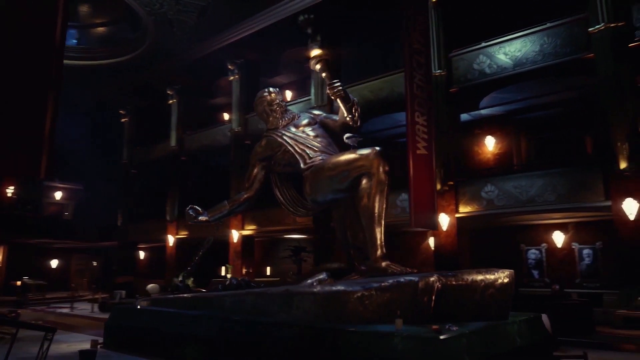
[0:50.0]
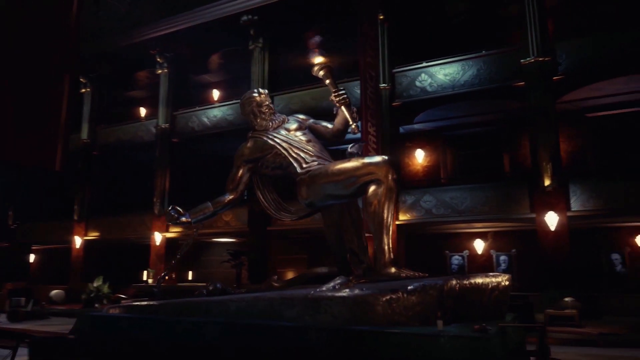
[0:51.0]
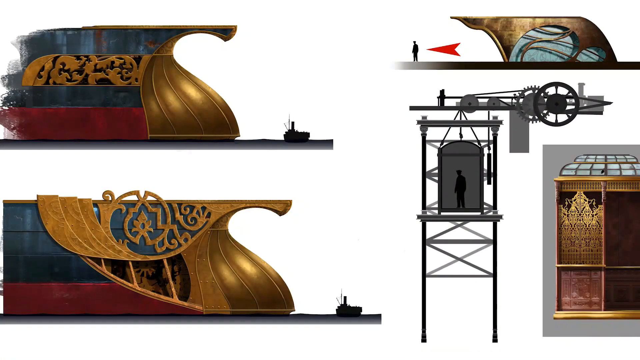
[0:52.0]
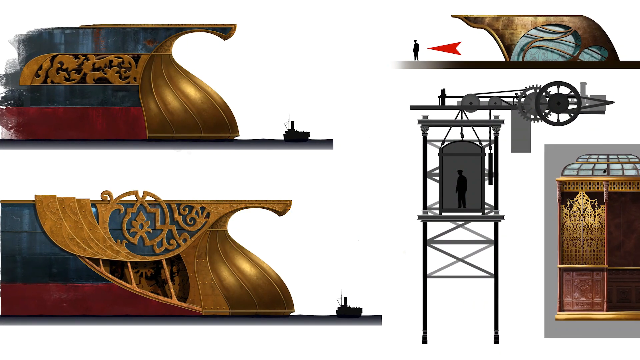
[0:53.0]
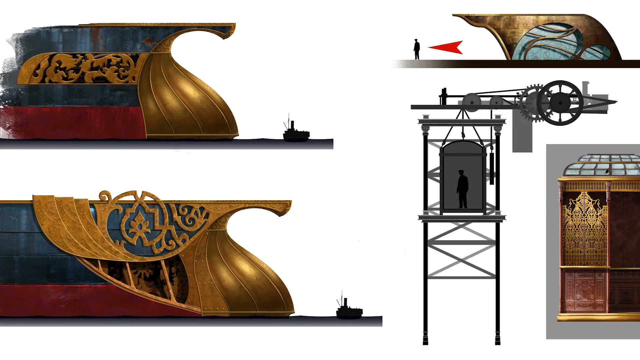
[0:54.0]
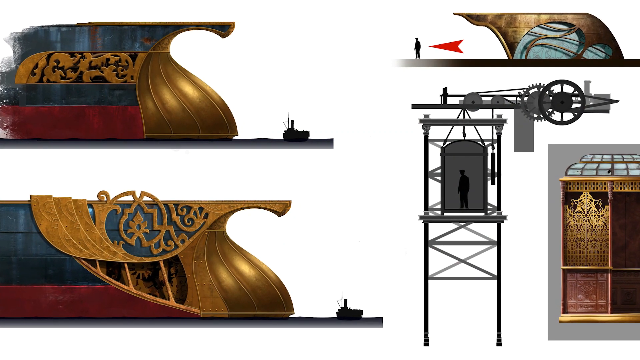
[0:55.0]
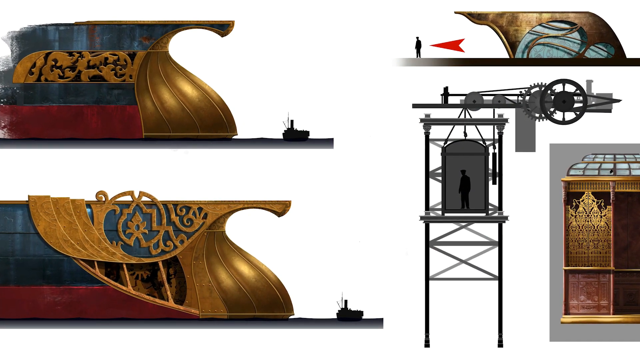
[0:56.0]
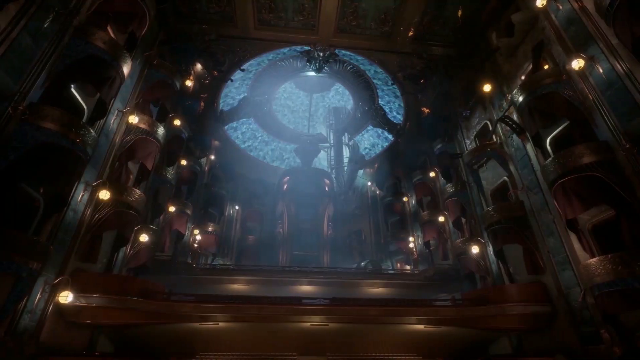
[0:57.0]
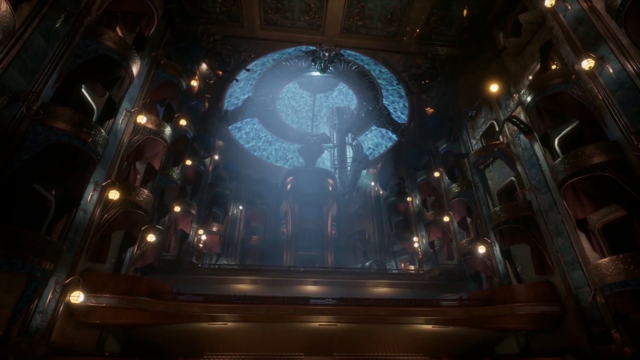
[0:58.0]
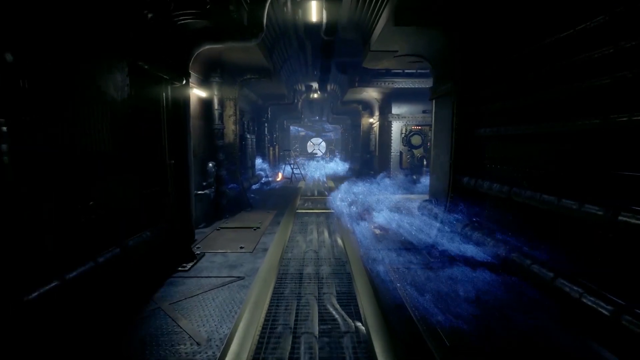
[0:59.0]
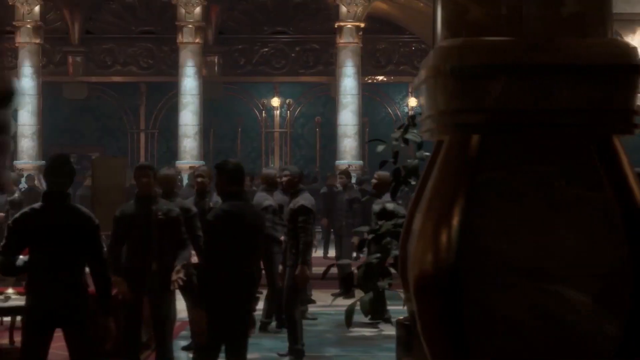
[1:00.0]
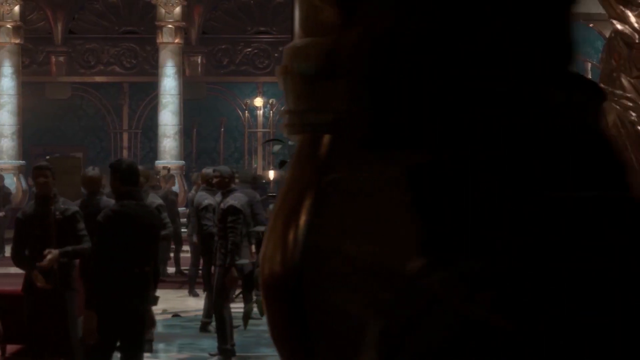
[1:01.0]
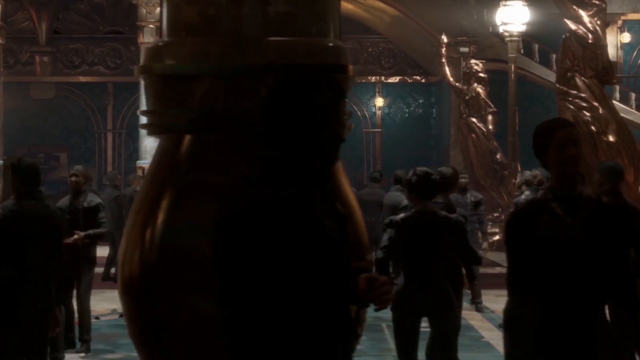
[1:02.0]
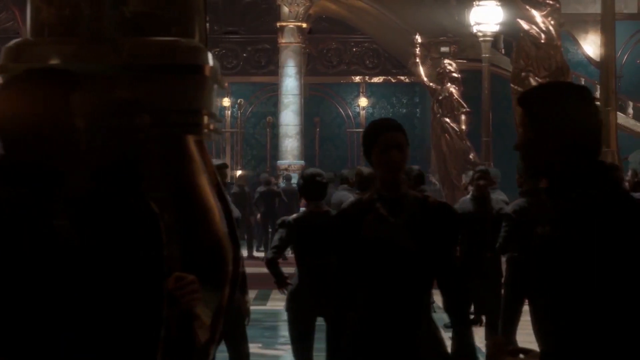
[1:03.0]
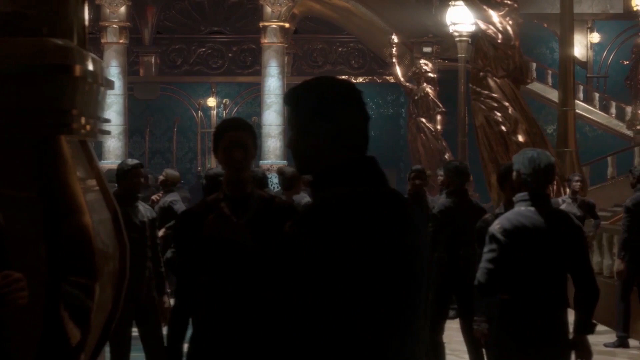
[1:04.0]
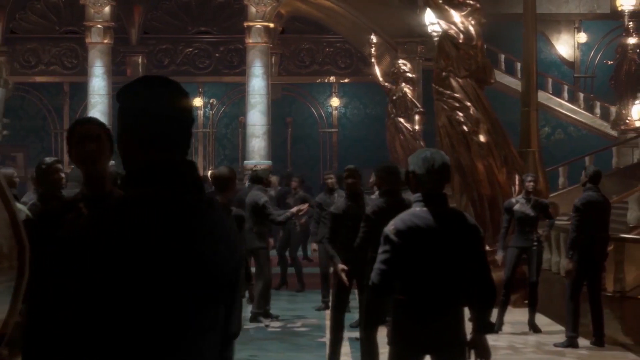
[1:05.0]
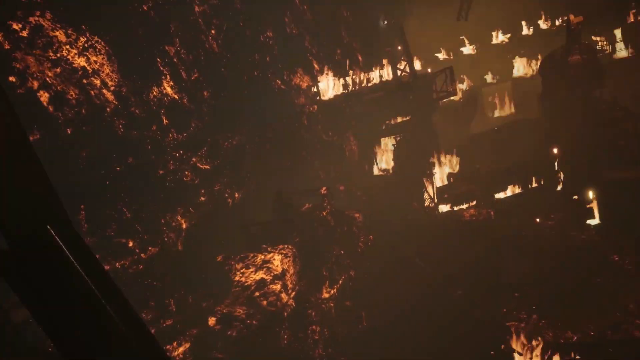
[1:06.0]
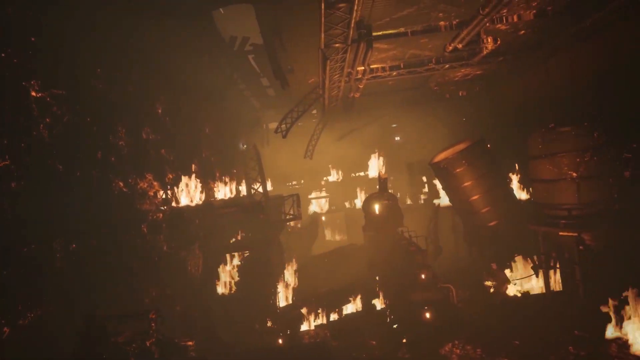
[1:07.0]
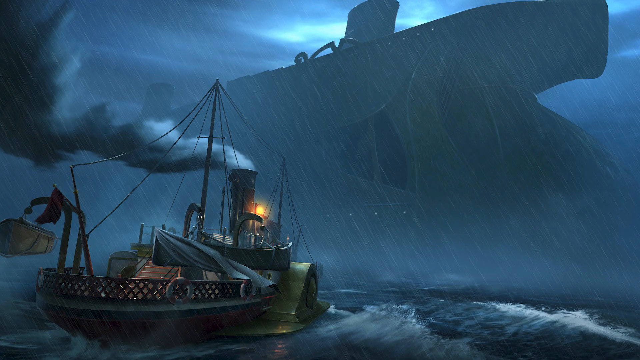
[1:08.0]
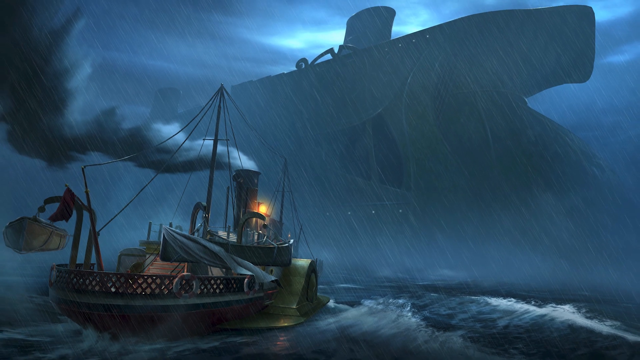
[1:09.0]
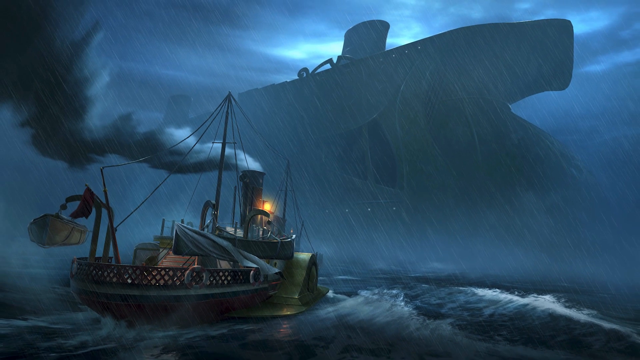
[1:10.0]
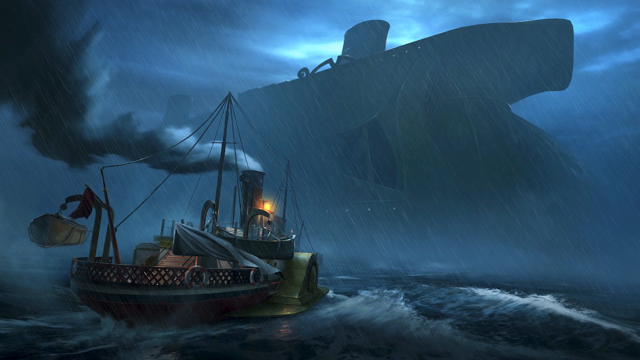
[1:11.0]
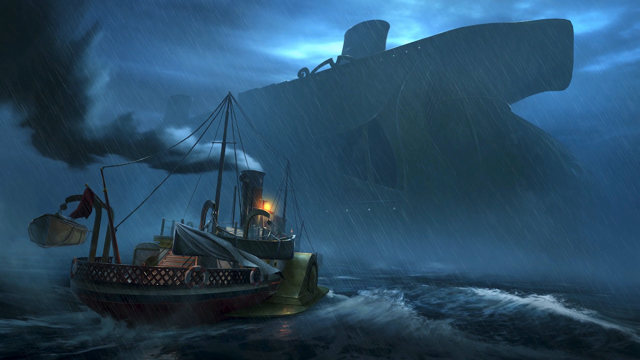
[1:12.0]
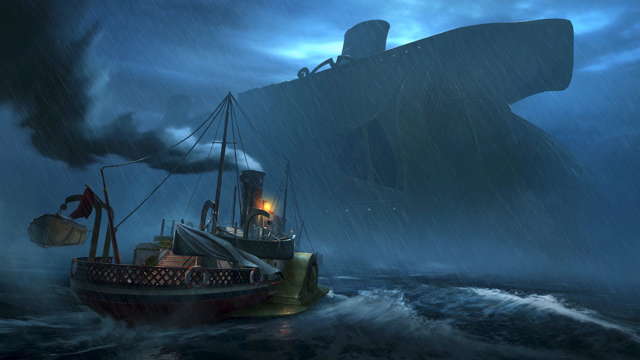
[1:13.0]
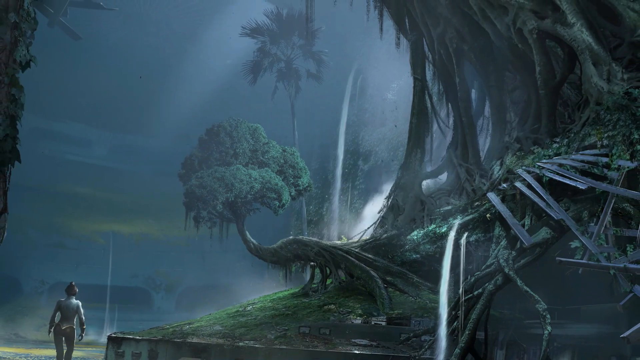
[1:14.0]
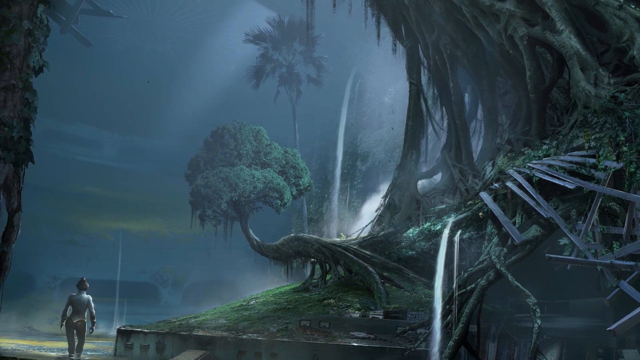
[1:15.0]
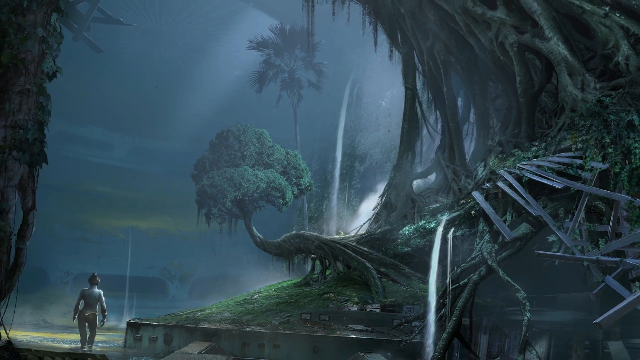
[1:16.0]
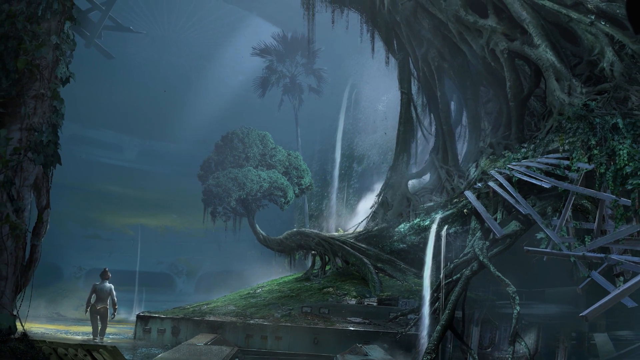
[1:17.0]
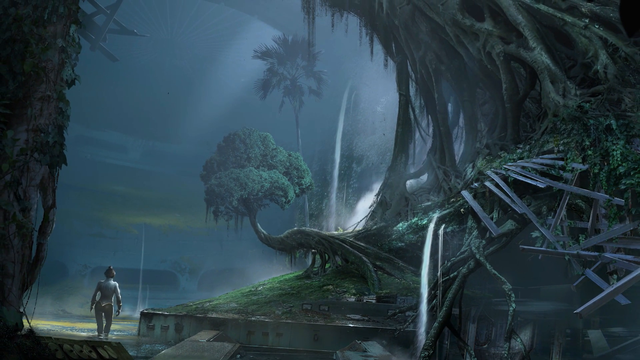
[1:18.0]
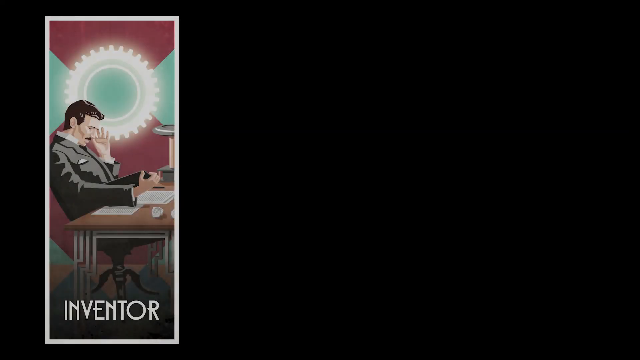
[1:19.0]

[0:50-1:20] The scene is back in the ship, which is dark and lit by sconce lights all over that look shaped like seashells. The inside is very dark mahogany wood, and there appears to be a statue of a man kneeling, with one leg up and one knee touching the ground, holding something in his hand. It then switches to a scene that is hard to make out: some type of sculpture shown two different ways, with a lot of gold and red on it. There is some type of tower with what looks like a man standing in it, kind of like an elevator being lowered down, and at the top is a gold thing with glass. A red arrow points to a person and then back to that object, which is very large and looks like something Egyptian. In what may be a scale comparison, a ship is shown, and the object is probably about ten times its size.